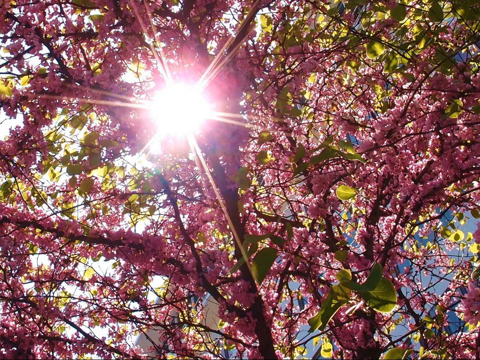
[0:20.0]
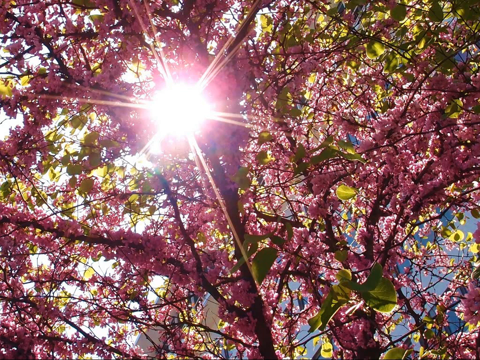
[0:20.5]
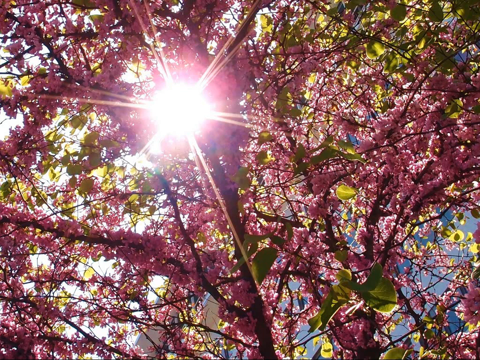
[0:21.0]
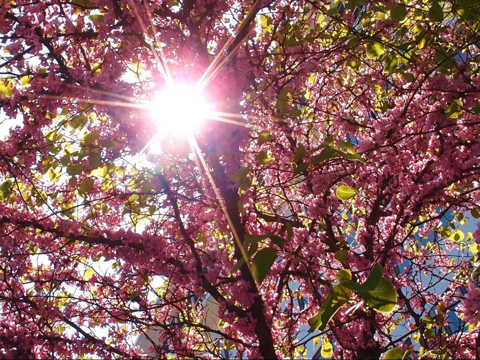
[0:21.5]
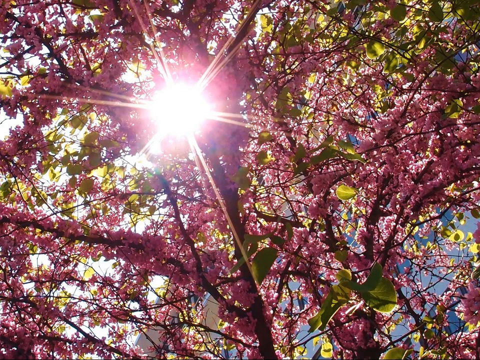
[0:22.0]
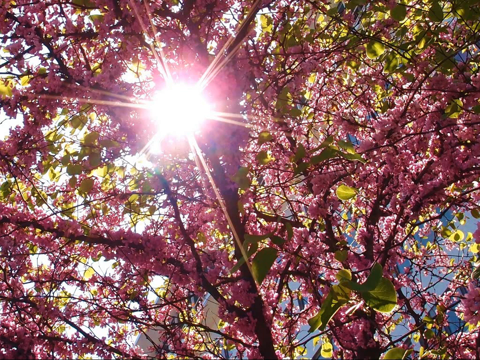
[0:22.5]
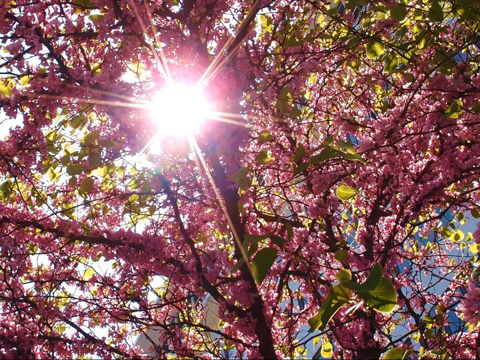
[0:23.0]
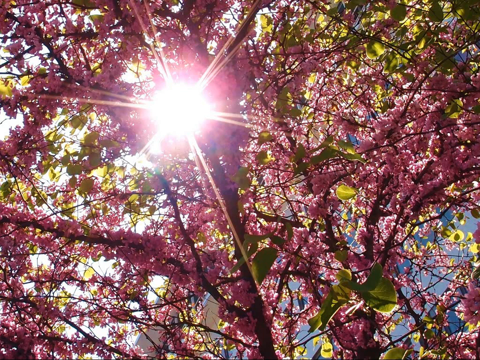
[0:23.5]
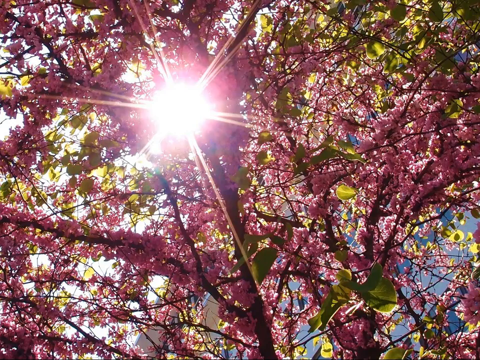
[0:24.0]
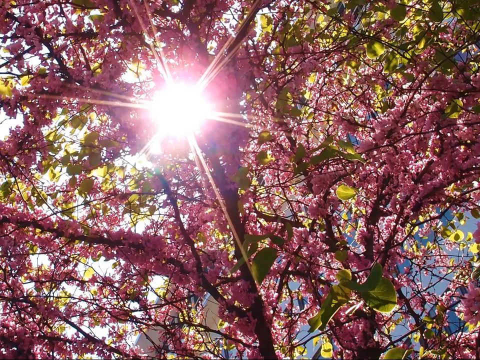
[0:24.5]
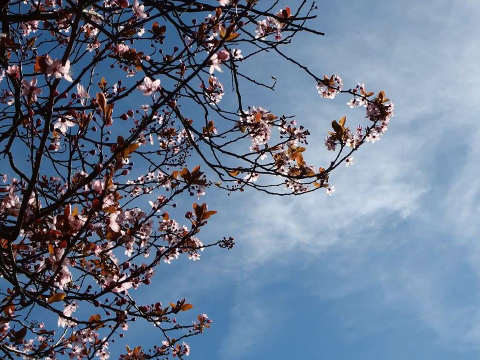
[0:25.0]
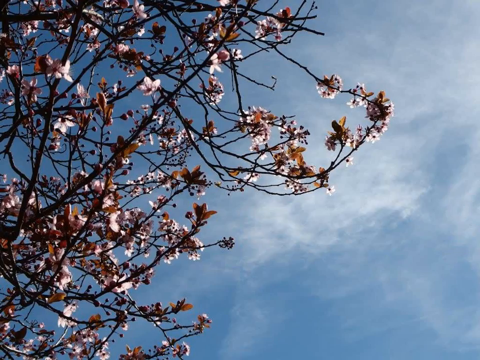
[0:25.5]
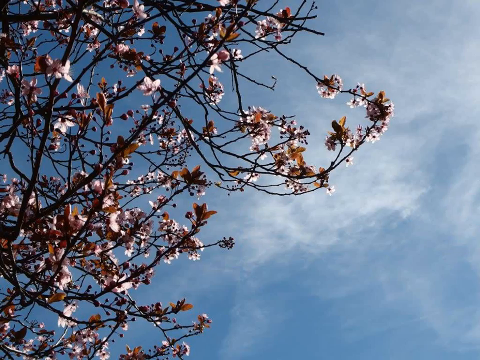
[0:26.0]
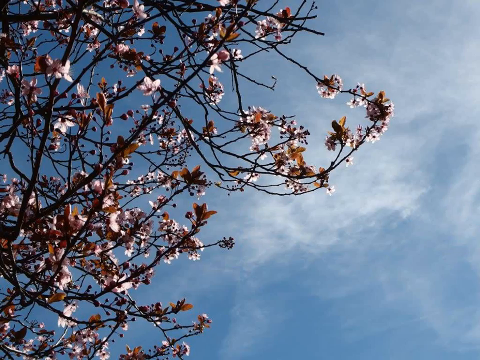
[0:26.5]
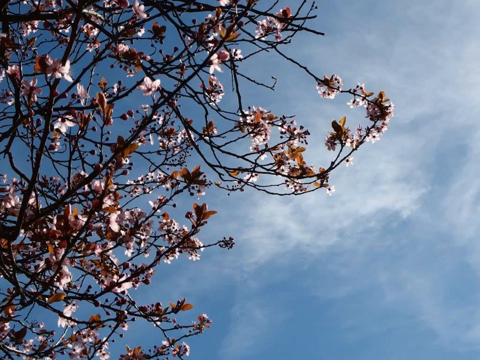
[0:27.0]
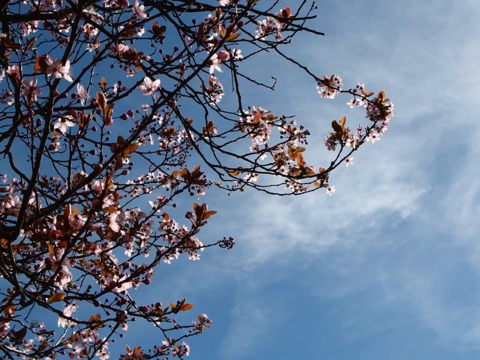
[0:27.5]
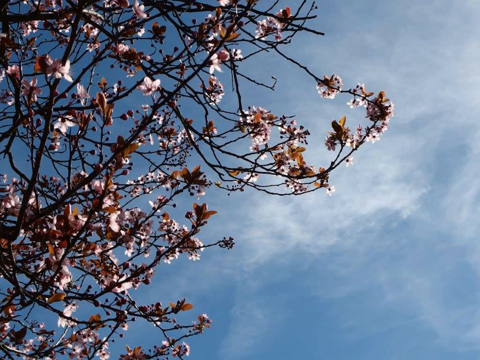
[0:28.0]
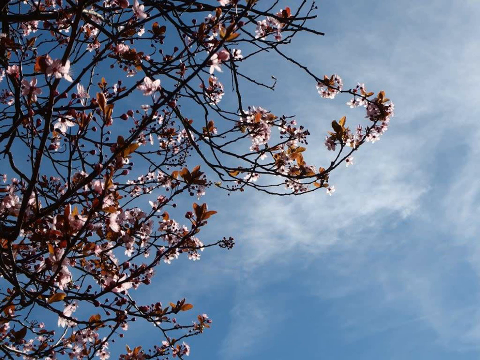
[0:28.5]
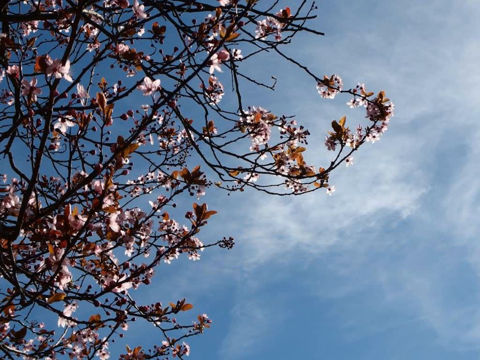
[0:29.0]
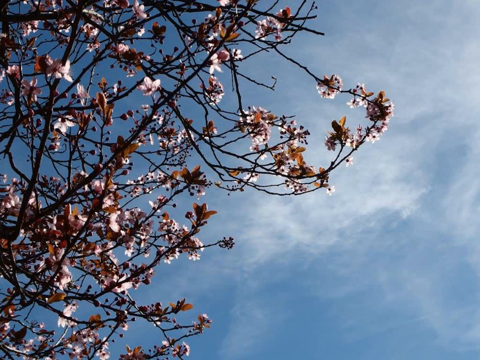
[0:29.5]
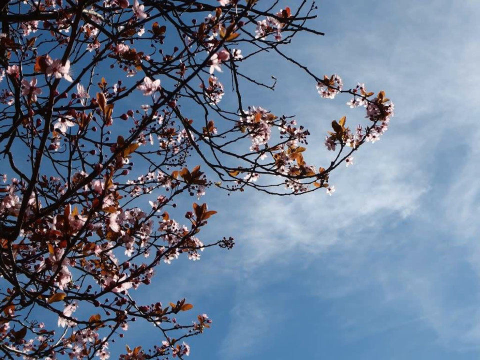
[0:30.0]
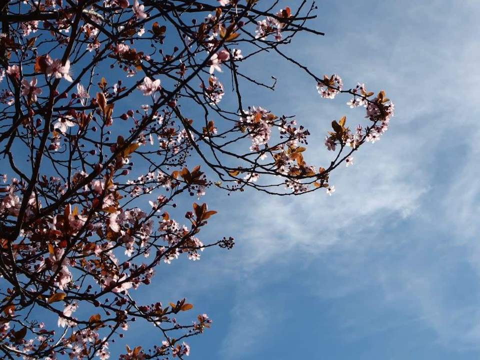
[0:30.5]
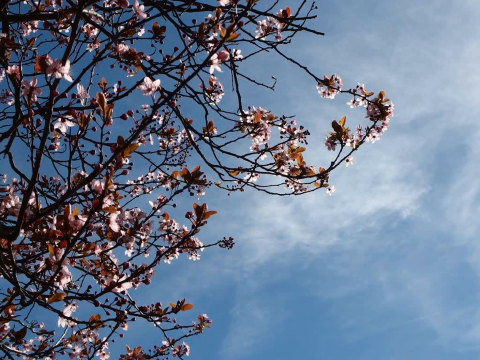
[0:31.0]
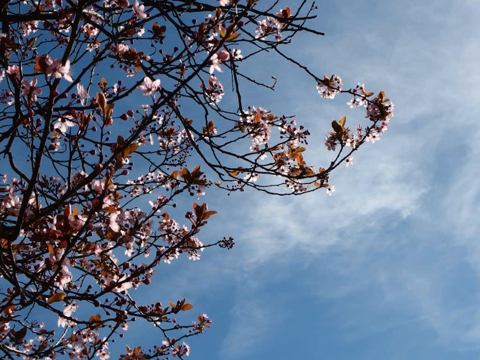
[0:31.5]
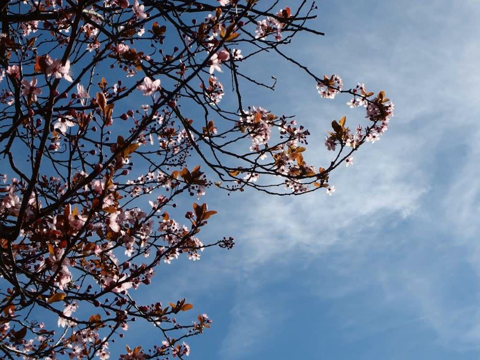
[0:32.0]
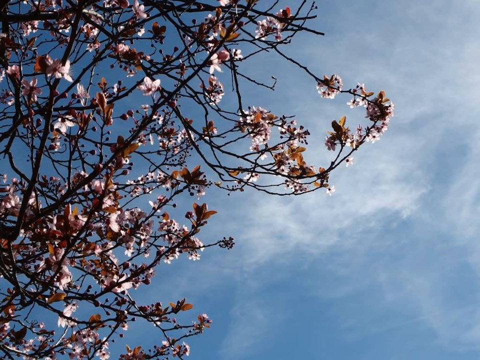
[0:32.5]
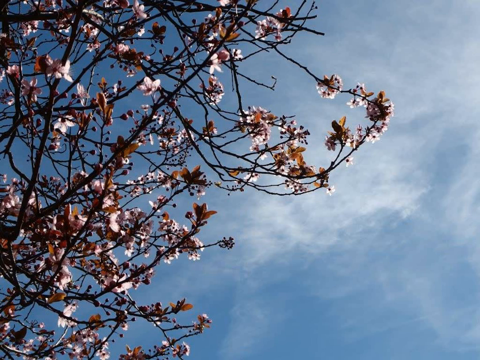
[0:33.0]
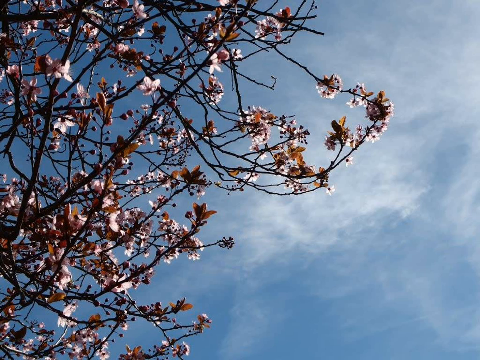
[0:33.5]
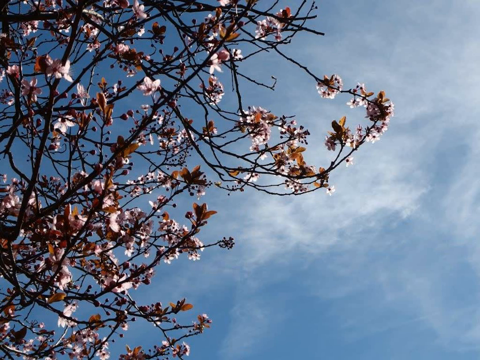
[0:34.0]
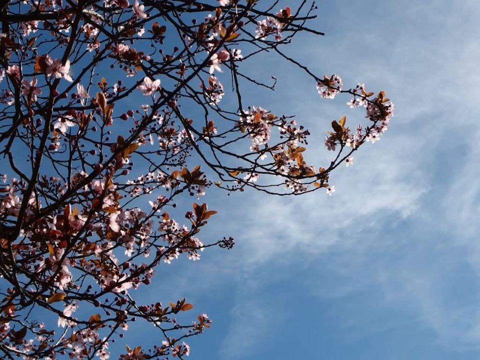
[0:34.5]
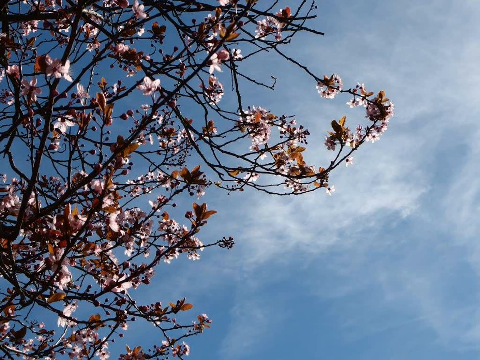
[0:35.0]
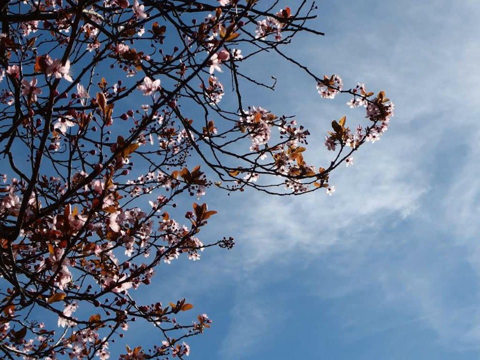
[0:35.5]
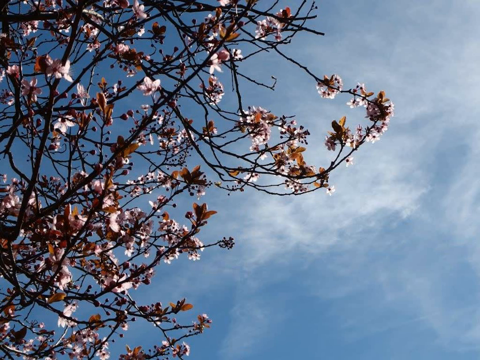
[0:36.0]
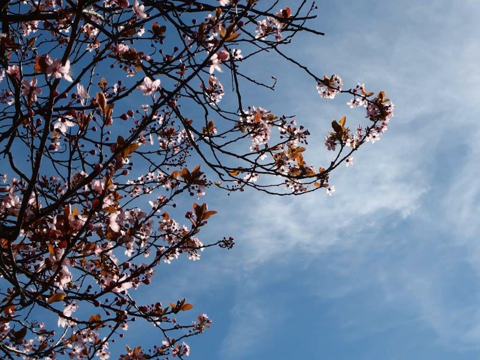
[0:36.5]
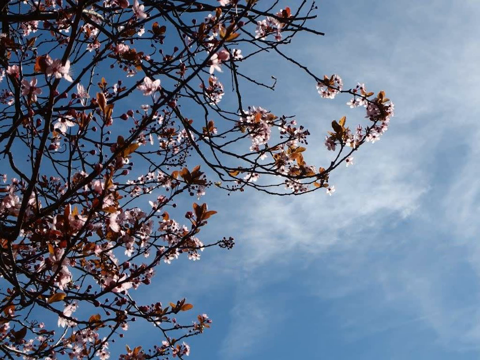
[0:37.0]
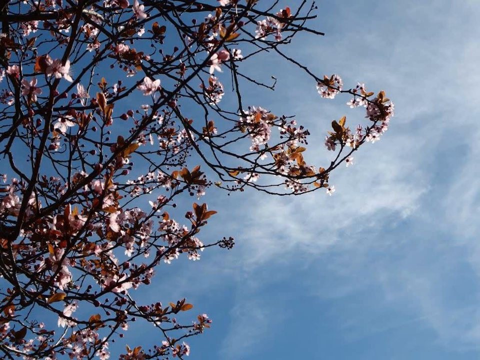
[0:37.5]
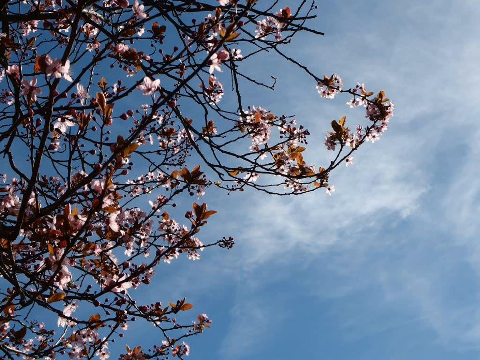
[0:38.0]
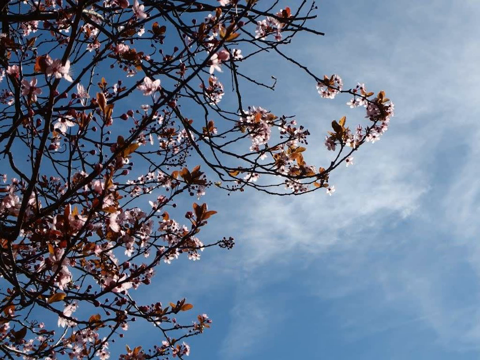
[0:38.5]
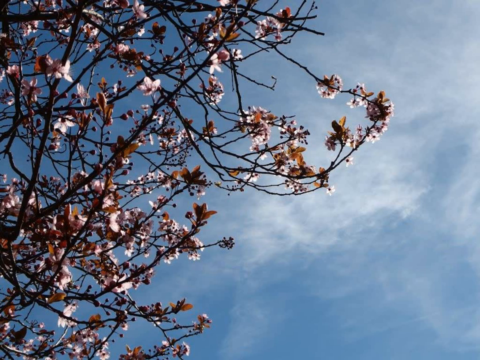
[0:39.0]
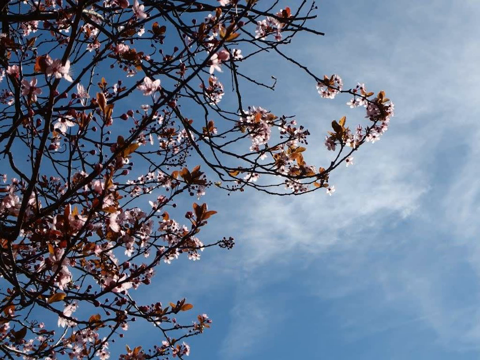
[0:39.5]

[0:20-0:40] The still image of the sun shining through the tree continues. The scene then switches to a close view of what looks like the edge of either a tree or a bush; it is unclear because the object is so close. On the left side are a whole bunch of small, dark brown twigs with white flowers, along with what appear to be brown leaves or brown flowers. To the right and in the background is a light blue sky, with some very thin, barely noticeable clouds on the right side. This scene is also still and does not move.